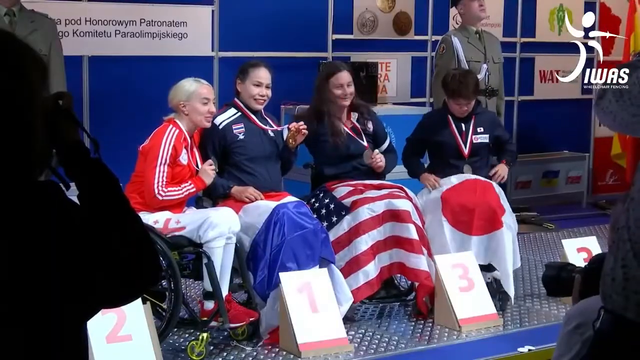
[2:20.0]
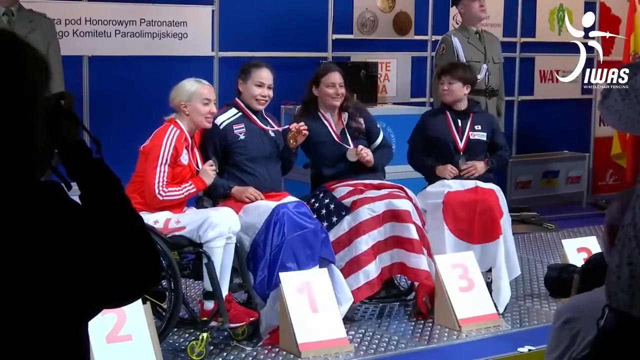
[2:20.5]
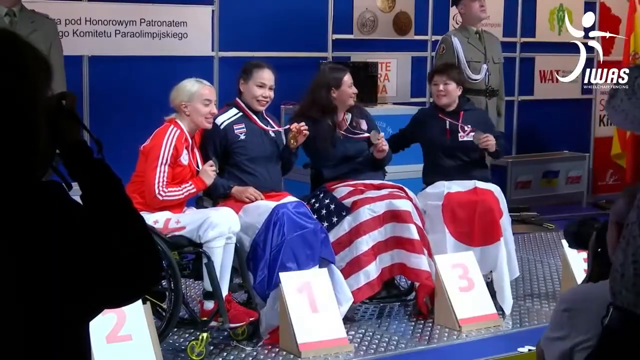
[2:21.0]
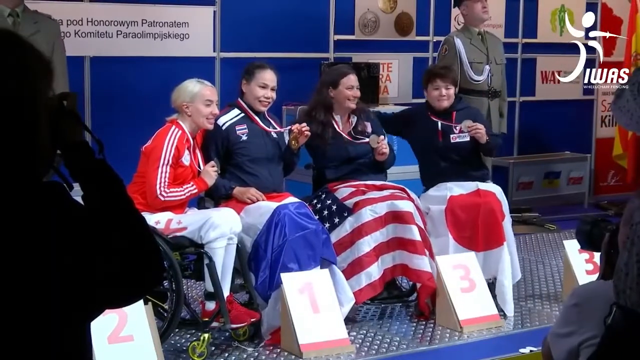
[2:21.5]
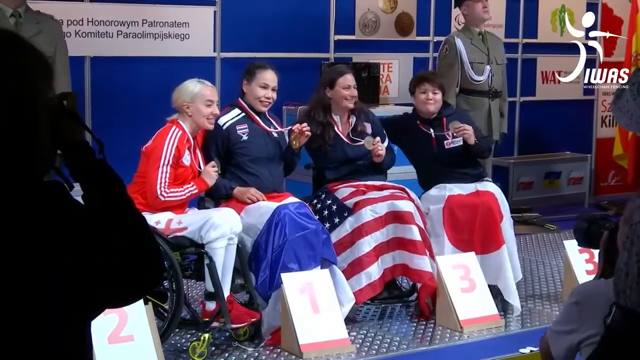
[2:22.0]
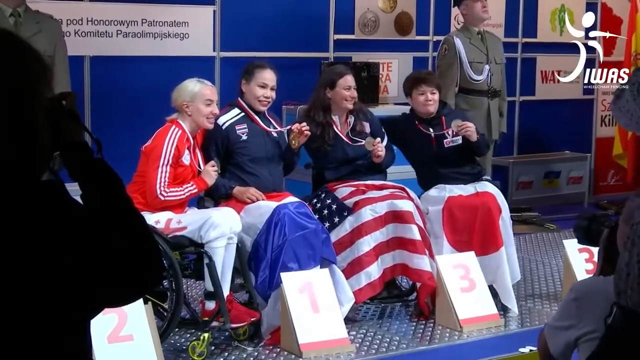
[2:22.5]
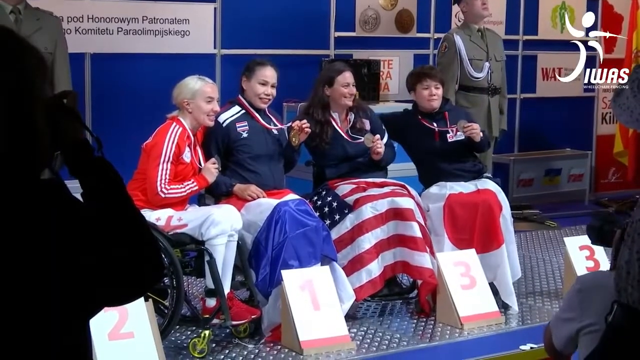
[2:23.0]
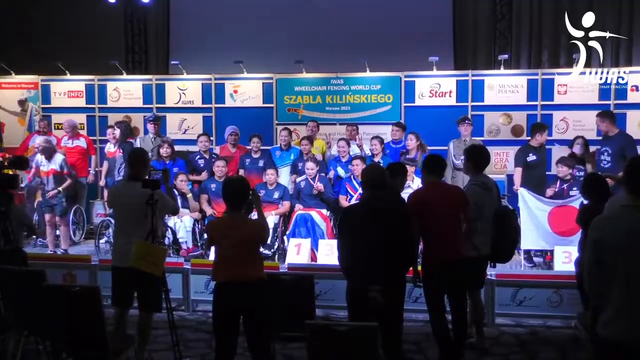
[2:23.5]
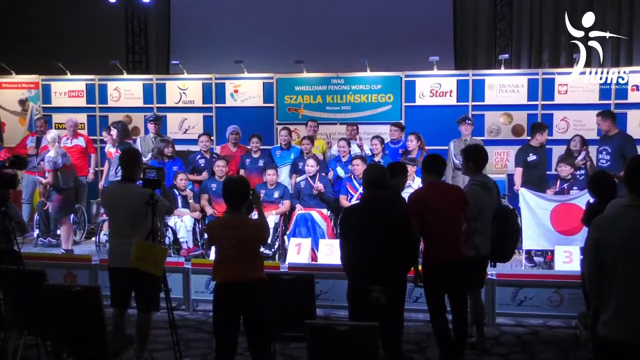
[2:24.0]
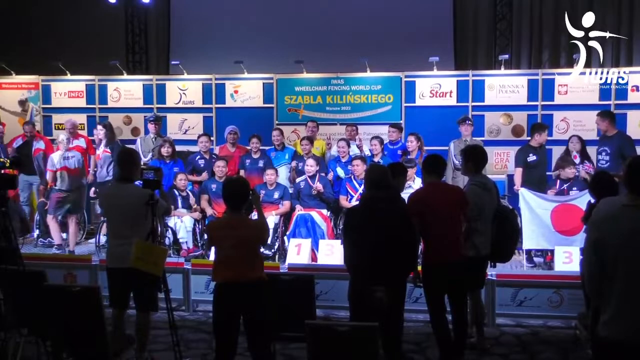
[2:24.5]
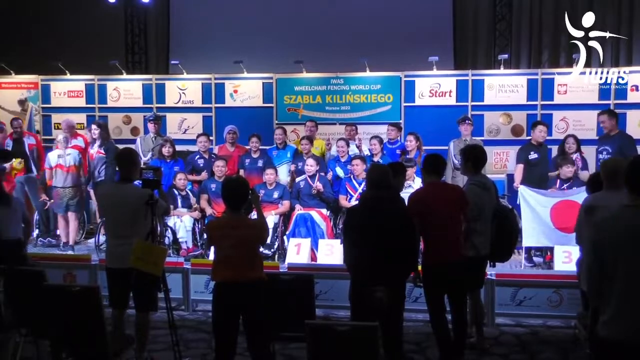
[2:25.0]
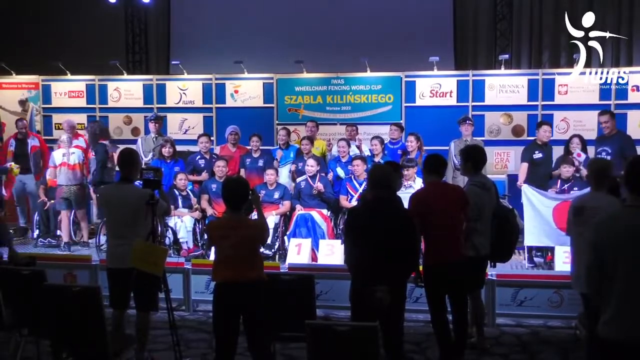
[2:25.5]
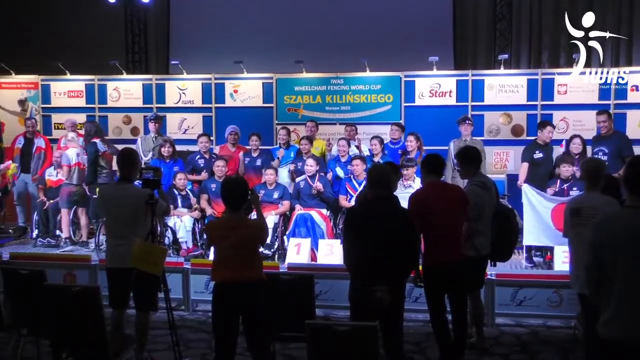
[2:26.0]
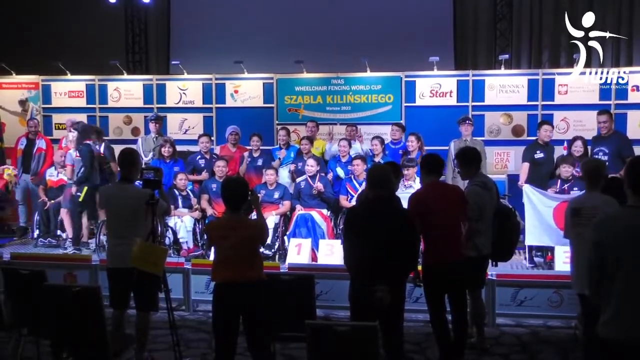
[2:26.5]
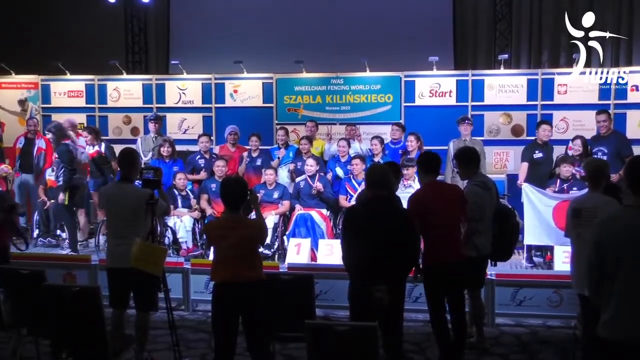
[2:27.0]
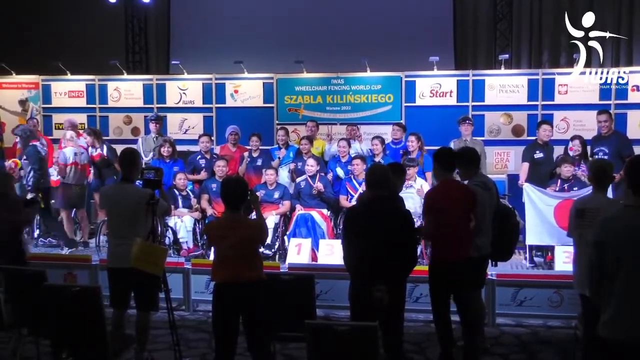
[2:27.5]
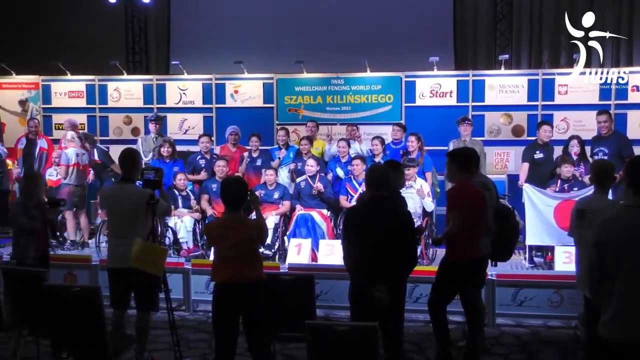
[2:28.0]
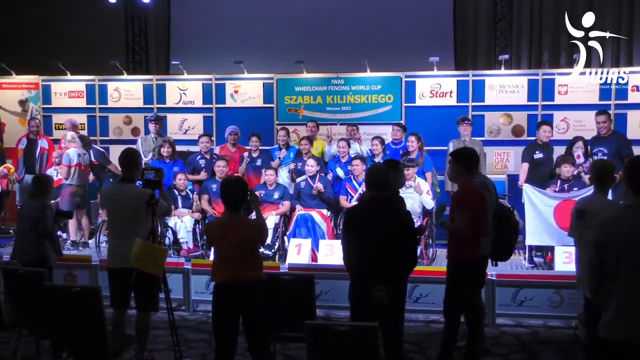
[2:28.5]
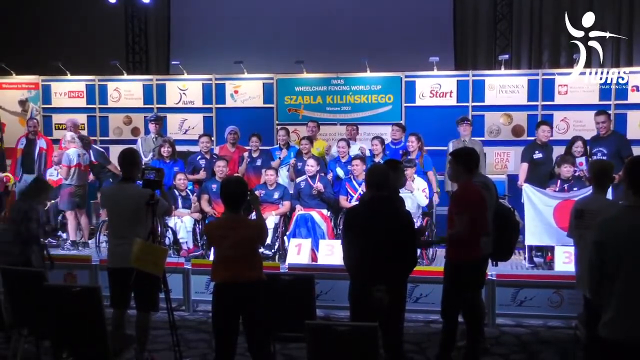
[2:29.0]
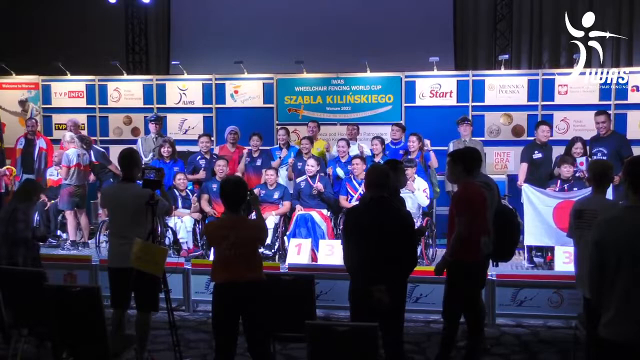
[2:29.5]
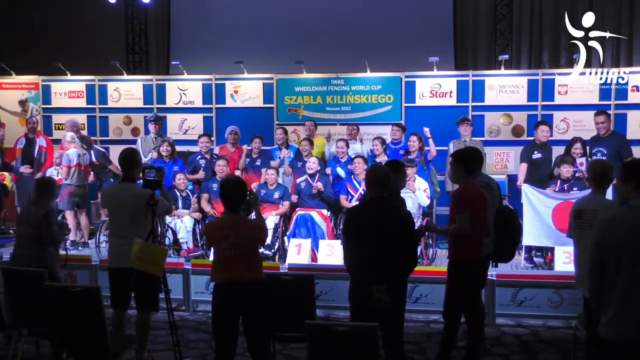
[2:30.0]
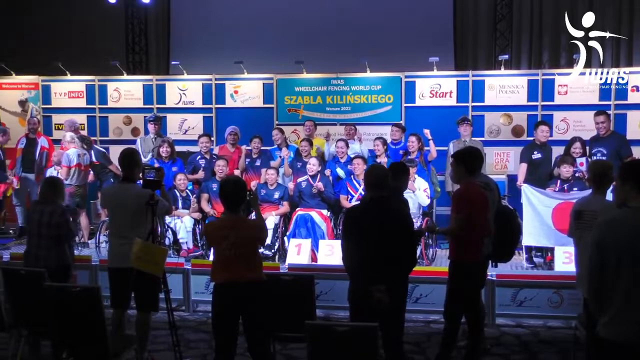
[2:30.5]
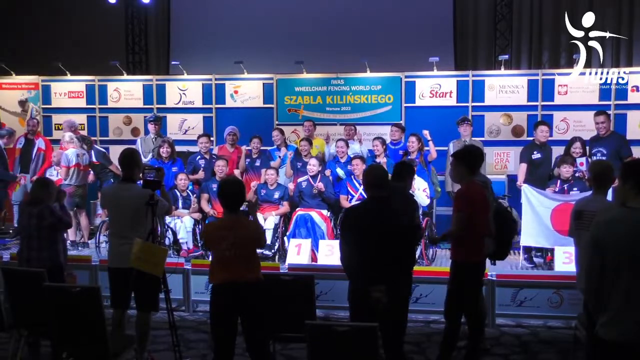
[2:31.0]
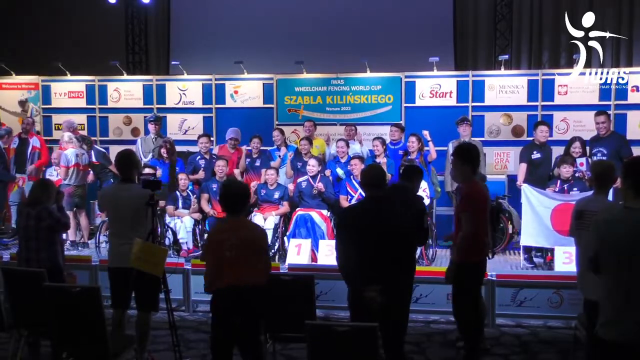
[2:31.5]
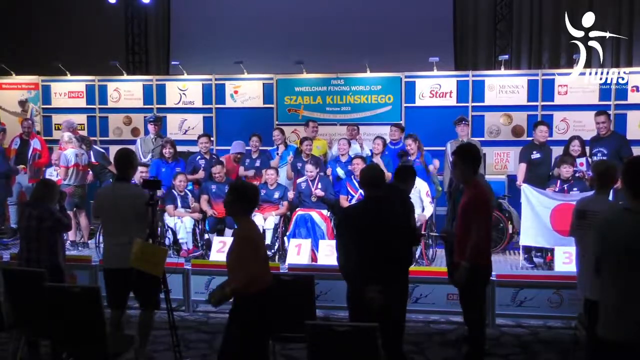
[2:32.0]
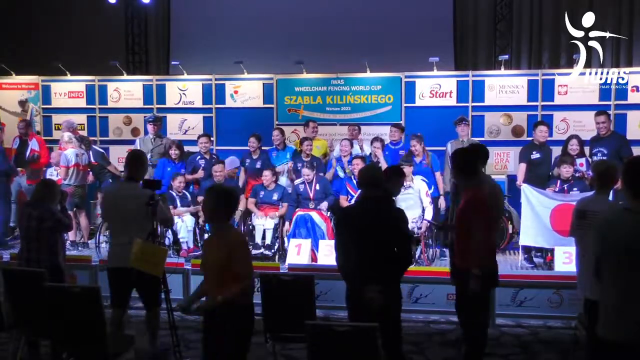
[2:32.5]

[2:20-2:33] Four contestants sit in their wheelchairs, all with medals, posing as pictures are taken of them; they are the winners of the competition. The winner is in the center, and the participants are in the middle of the stage, holding up their medals. The view zooms out to show other people behind them at this very large event. Some people on the right side hold up a Japanese flag, and spectators up front are taking pictures and recording the event. Everyone looks very happy.